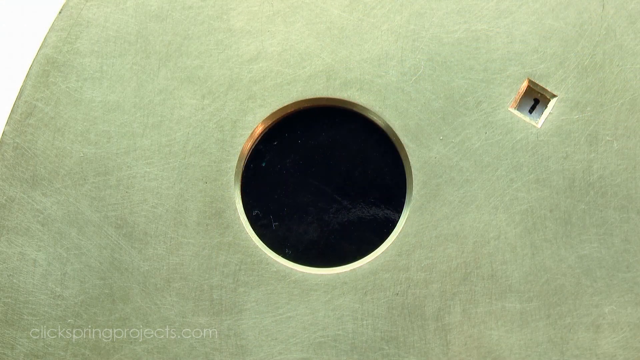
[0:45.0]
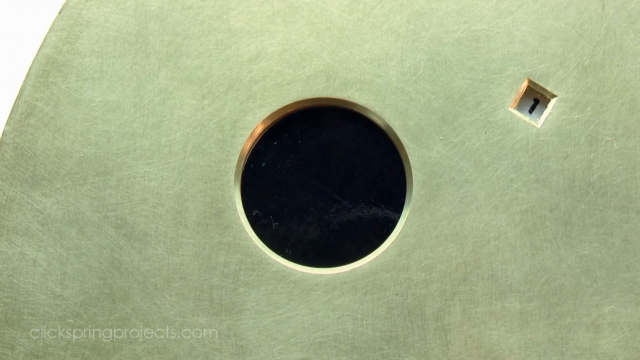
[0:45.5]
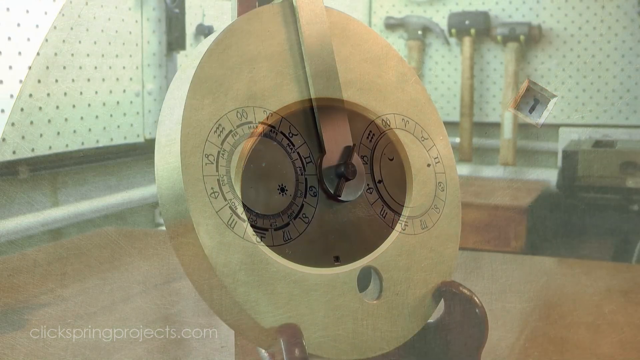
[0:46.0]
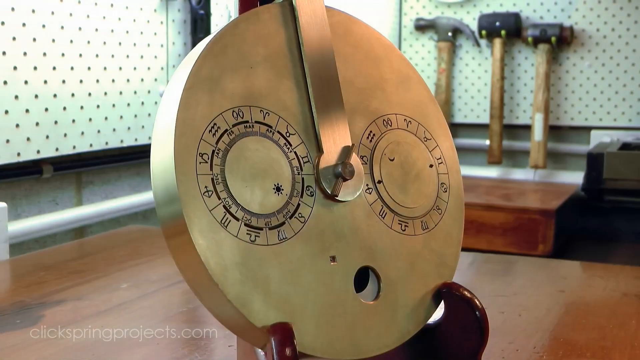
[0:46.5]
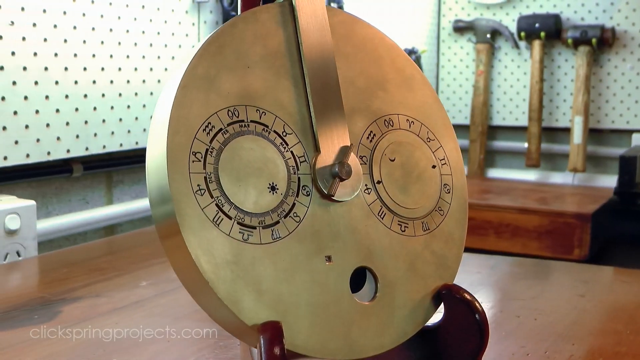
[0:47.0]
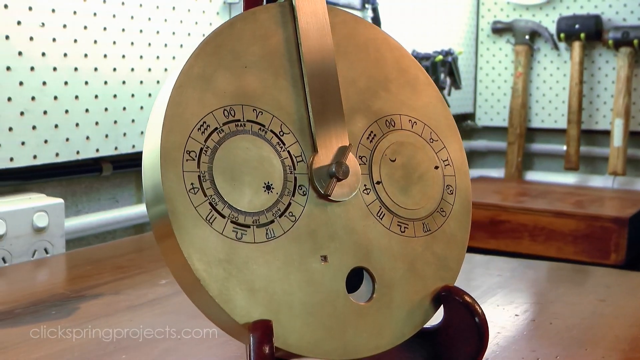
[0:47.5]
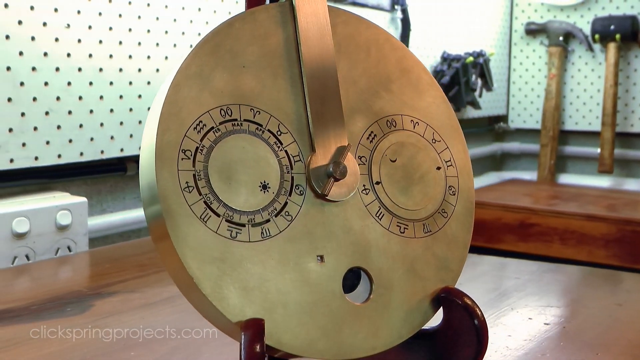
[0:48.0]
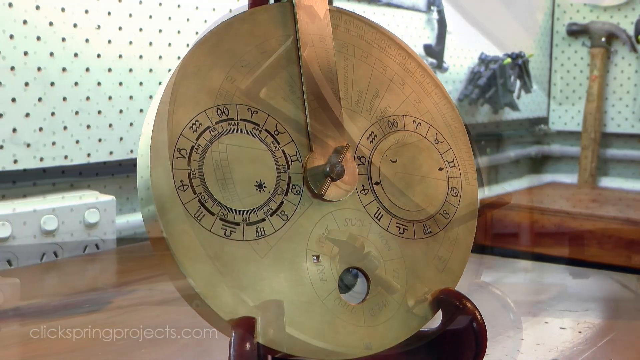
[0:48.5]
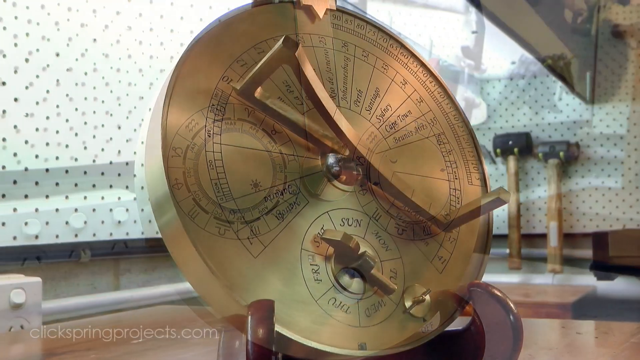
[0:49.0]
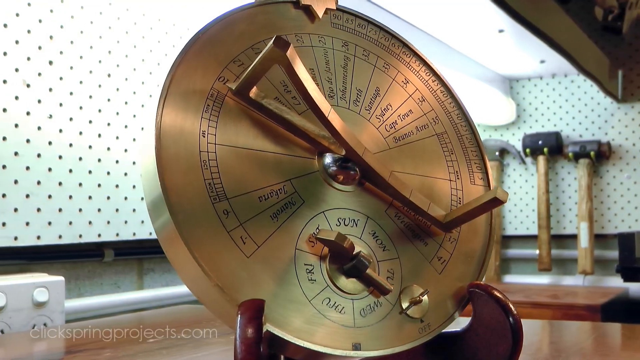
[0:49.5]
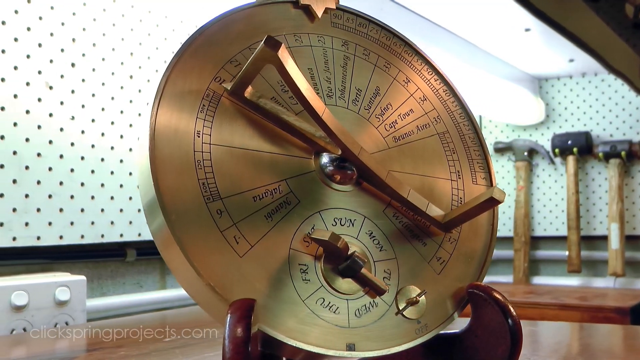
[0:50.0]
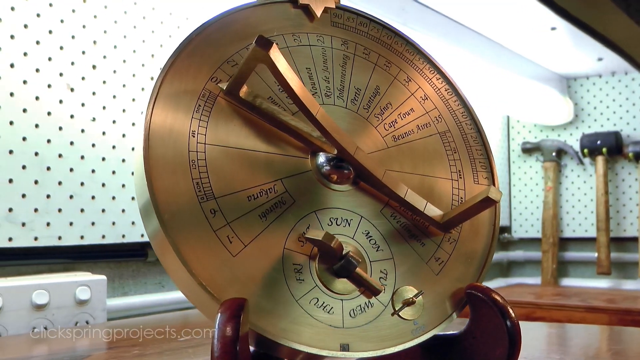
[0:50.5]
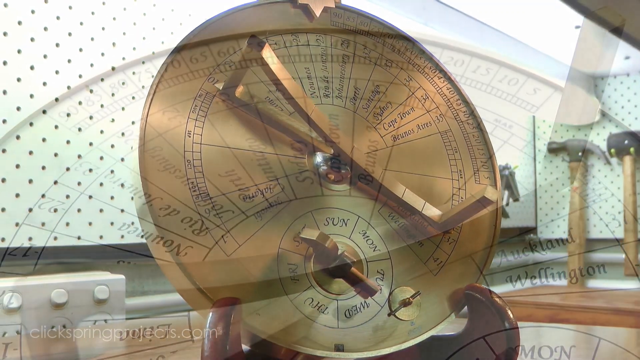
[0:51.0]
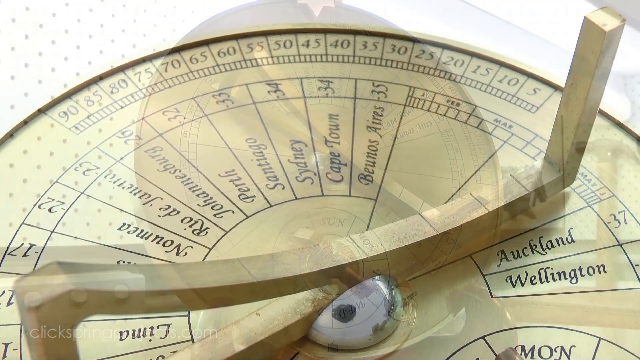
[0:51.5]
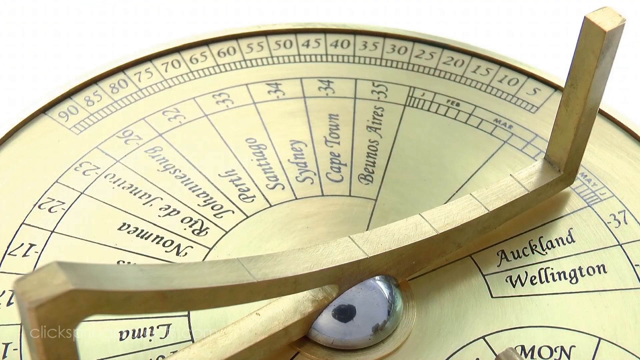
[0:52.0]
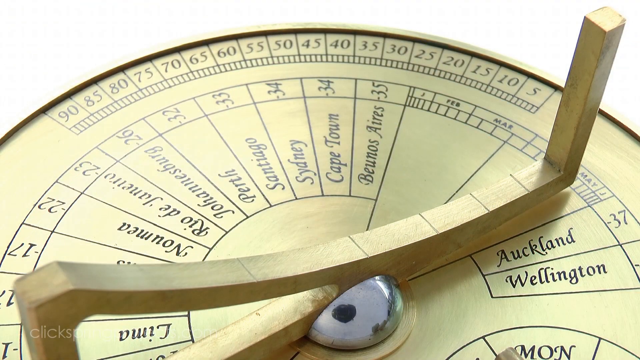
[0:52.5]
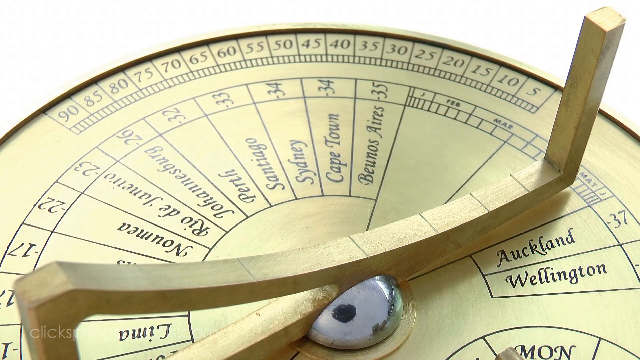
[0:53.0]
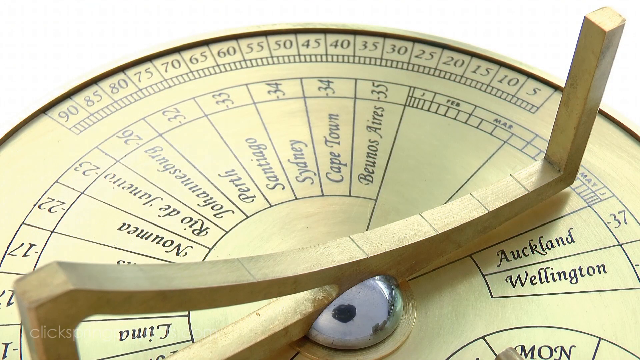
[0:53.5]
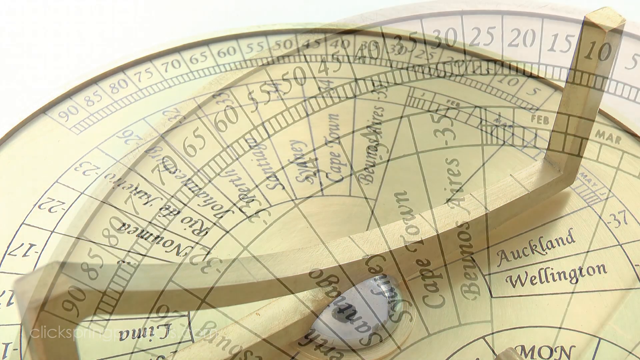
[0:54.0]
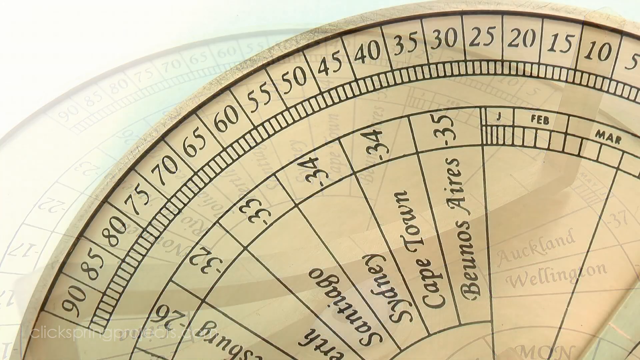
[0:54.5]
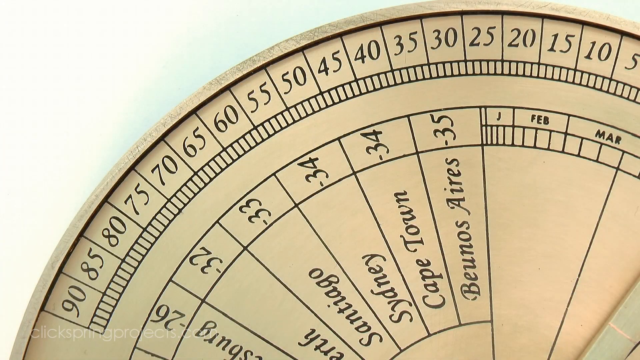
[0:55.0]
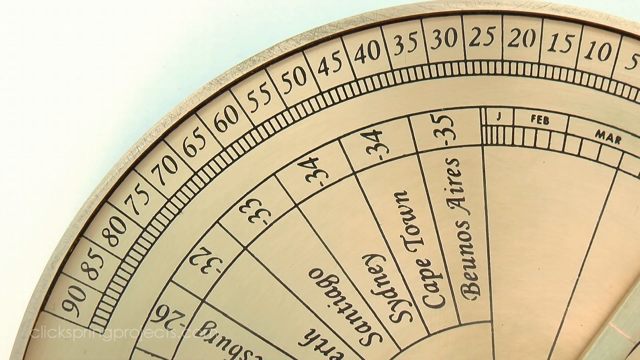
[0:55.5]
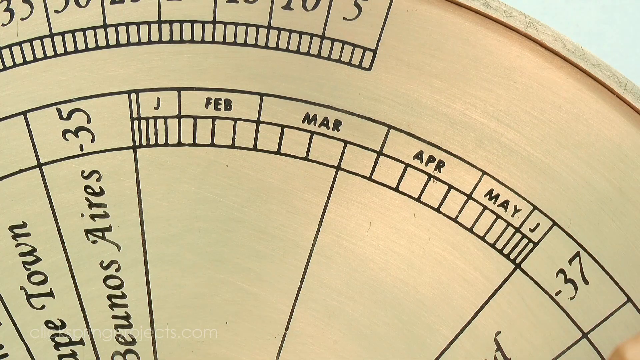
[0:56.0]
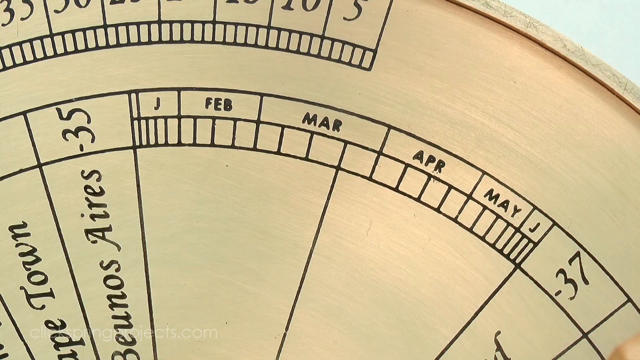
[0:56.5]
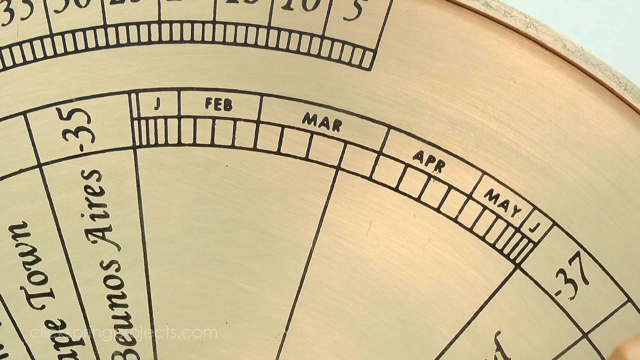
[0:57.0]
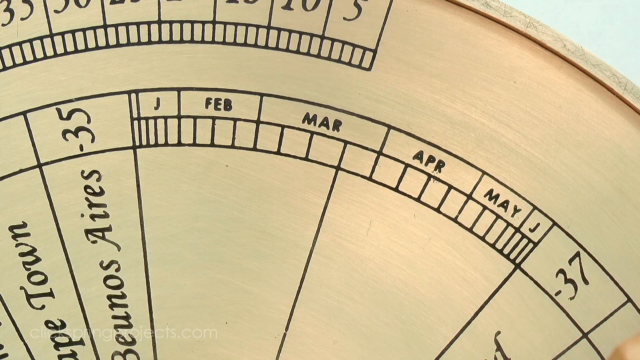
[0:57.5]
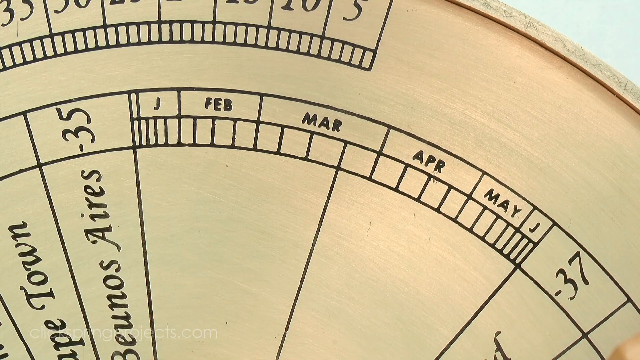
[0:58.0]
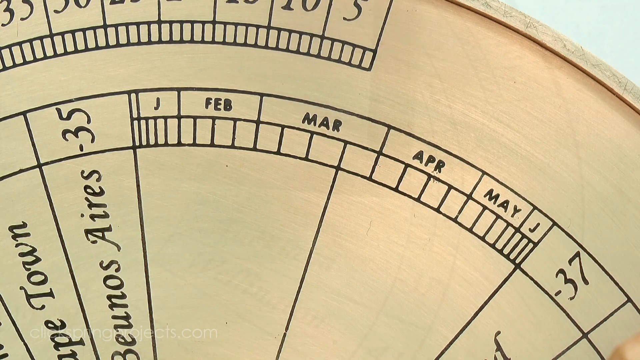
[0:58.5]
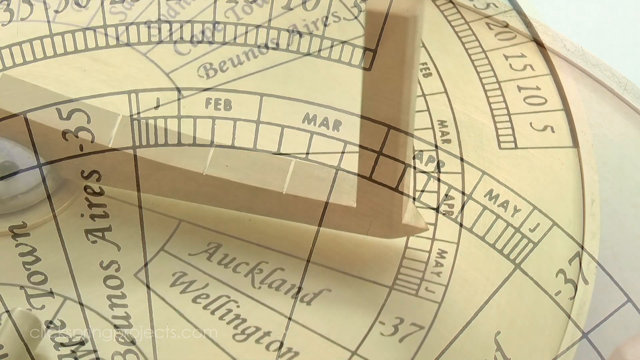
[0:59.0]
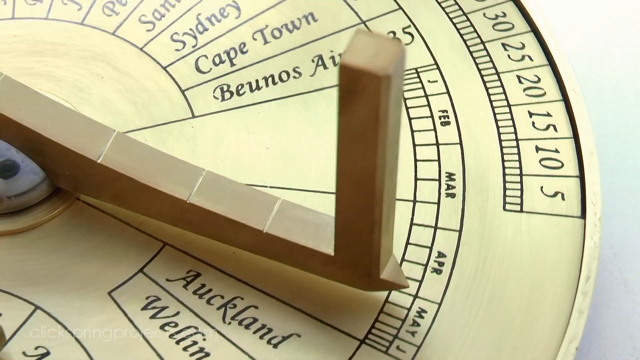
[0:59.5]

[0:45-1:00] A completely black circle shows the full phase of the moon, and then the view cuts to a side of the golden sundial showing the phase of the moon and the phase of the sun: the sun on the left side and the moon on the right, with different symbols going around both circular areas. On the left side the months are clearly marked, related to the sun. Turning to the other side, there are different places such as Sydney, Cape Town, Buenos Aires, Auckland, Wellington, Rio de Janeiro and Johannesburg, along with months and numerous numbers written on this side of the Byzantine sundial calendar.